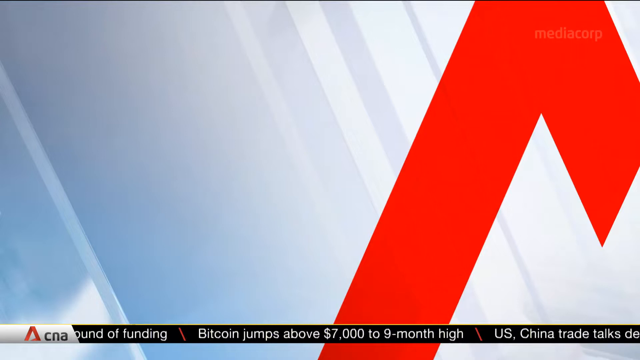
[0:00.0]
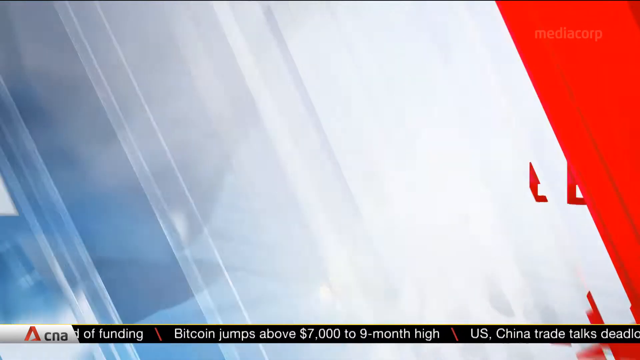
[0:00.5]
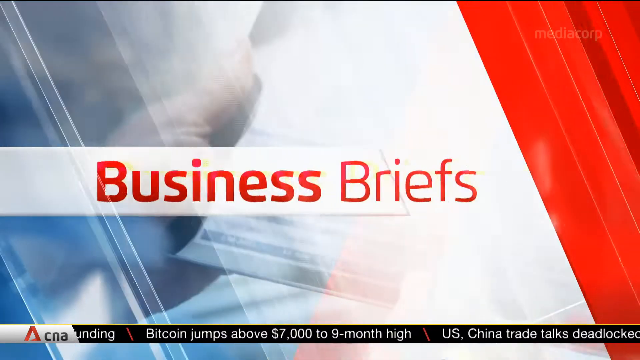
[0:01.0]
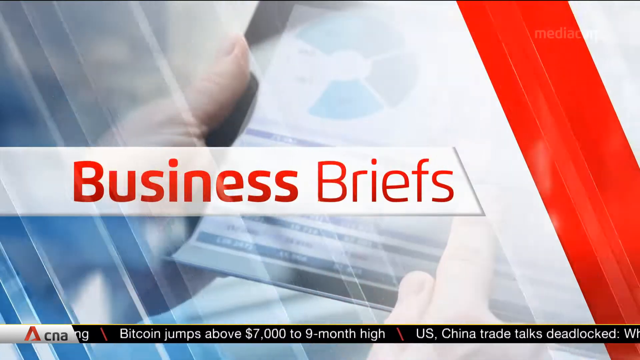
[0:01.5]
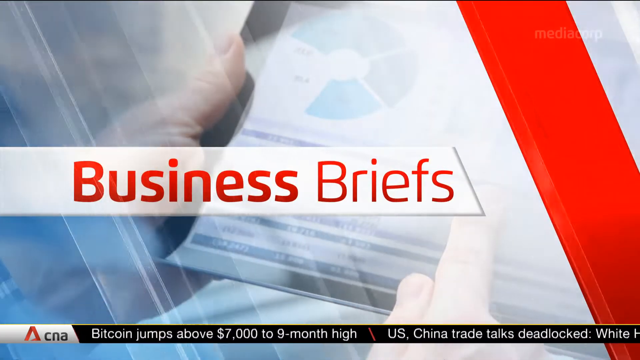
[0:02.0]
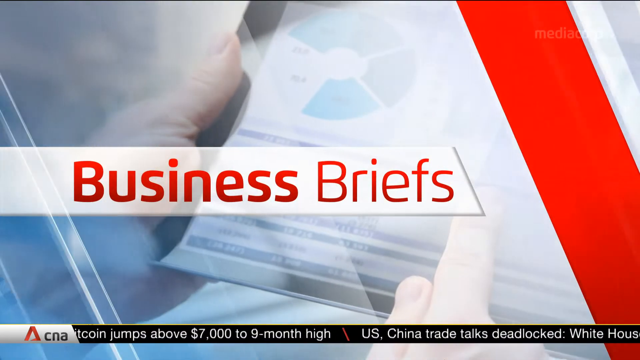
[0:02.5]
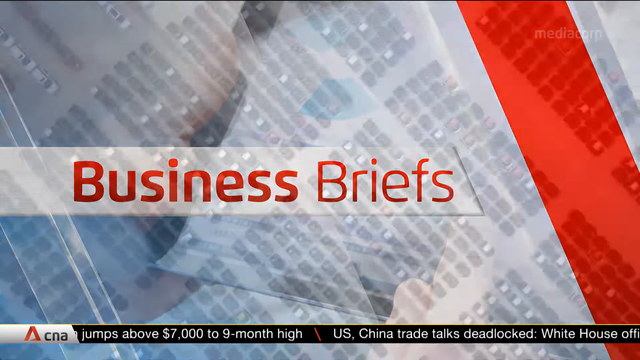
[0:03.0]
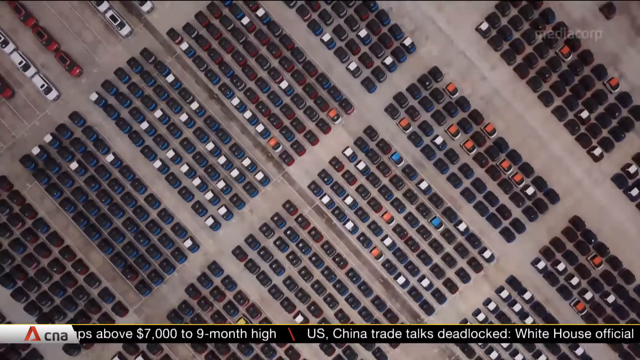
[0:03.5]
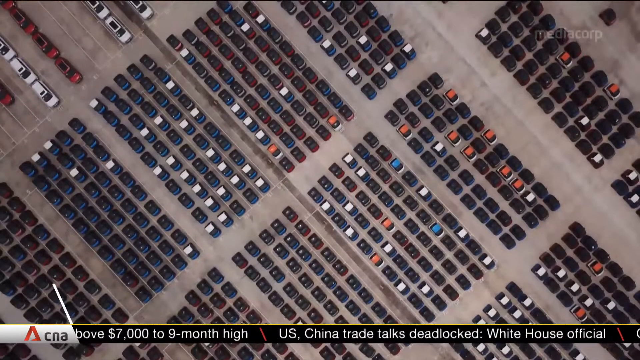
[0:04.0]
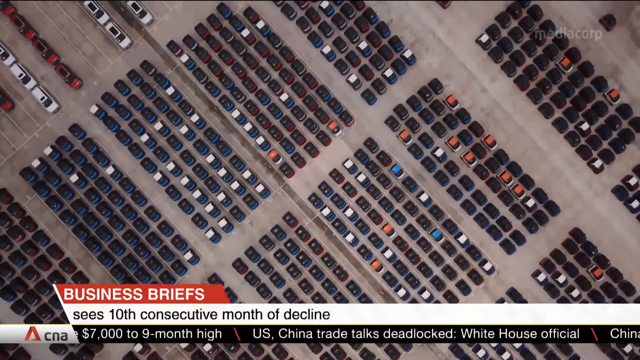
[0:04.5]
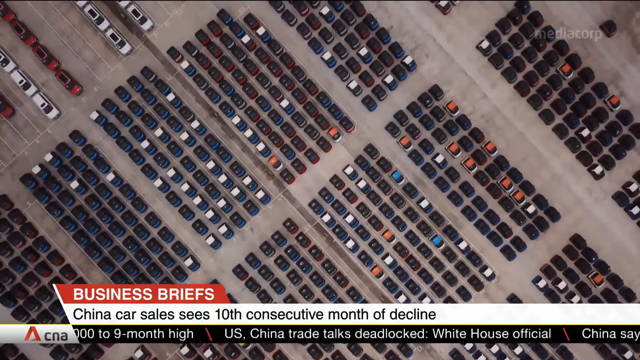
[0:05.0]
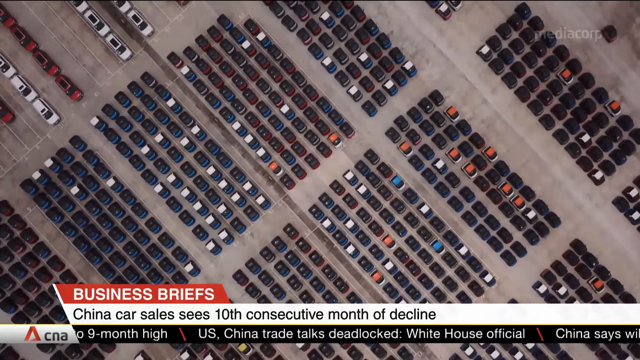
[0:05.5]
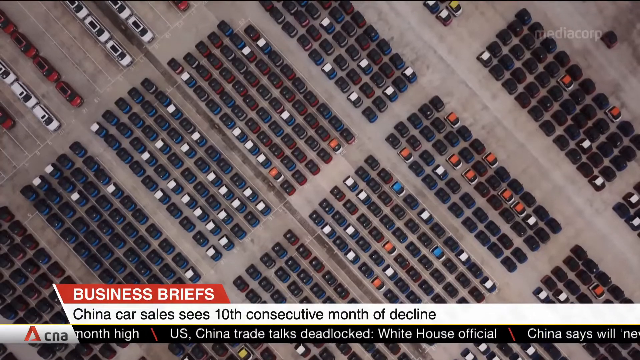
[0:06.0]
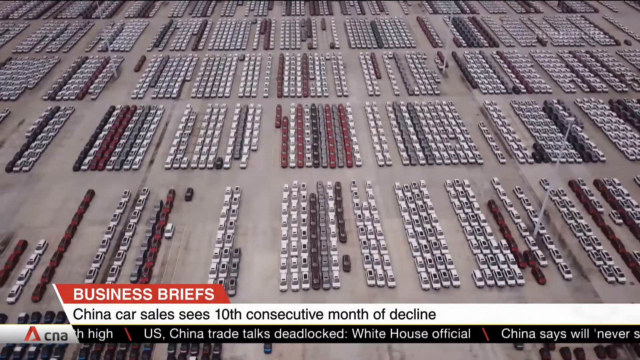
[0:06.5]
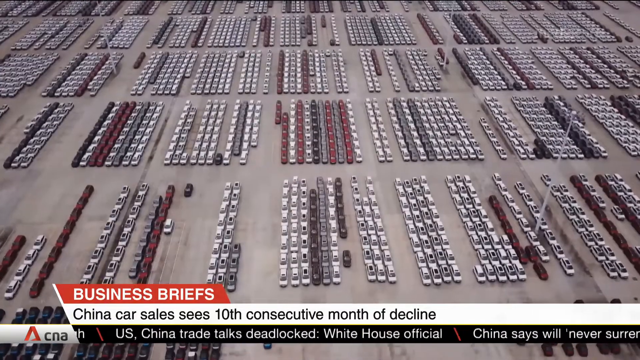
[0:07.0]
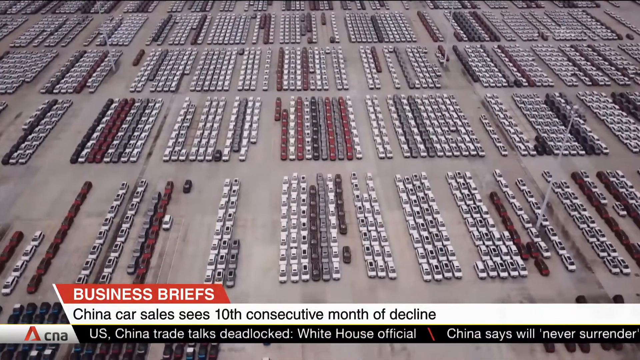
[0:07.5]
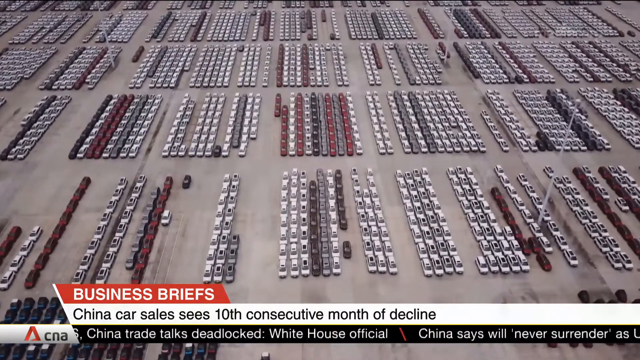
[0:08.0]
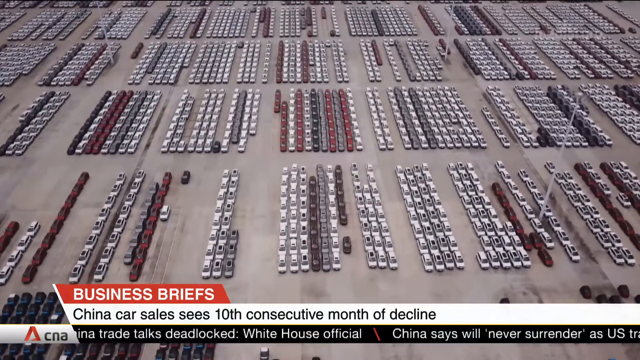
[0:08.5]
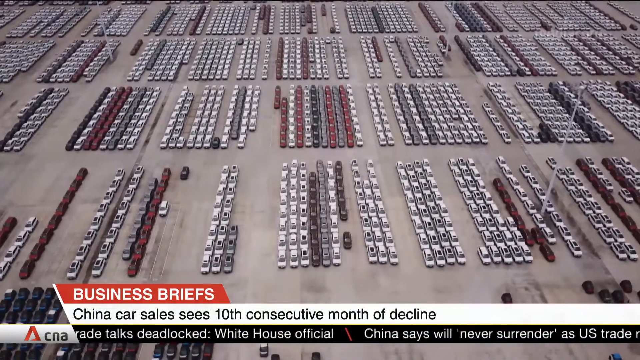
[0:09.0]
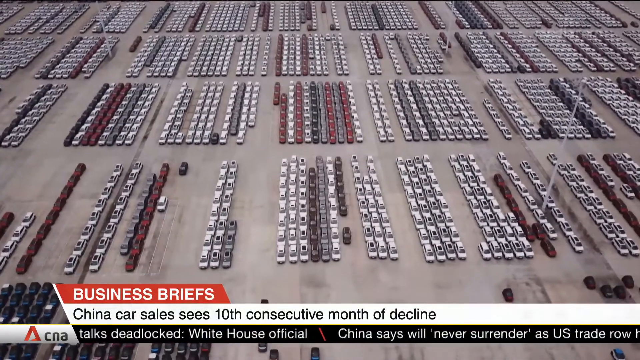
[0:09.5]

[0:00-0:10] Text reading "business briefs" appears, introducing something. An aerial view shows a parking lot or parking garage with lots of vehicles parked in very symmetric rows and columns. Another aerial shot pans down over what are presumably vehicles. In the upper left-hand corner there are clearly some vehicles, some white and some red. Most of the view is a lot of black, with some white here and there and a couple of blue and red spots, all packed together in rows. Text reads "China car sales see 10th consecutive month of decline."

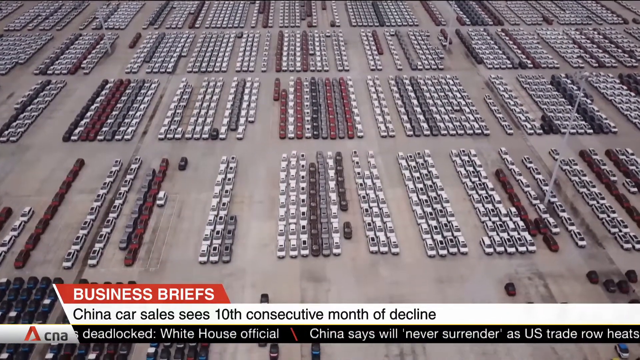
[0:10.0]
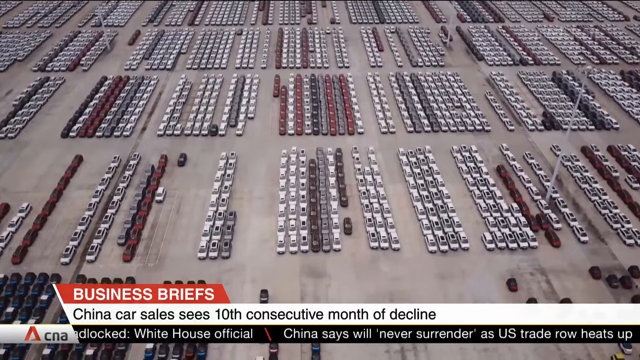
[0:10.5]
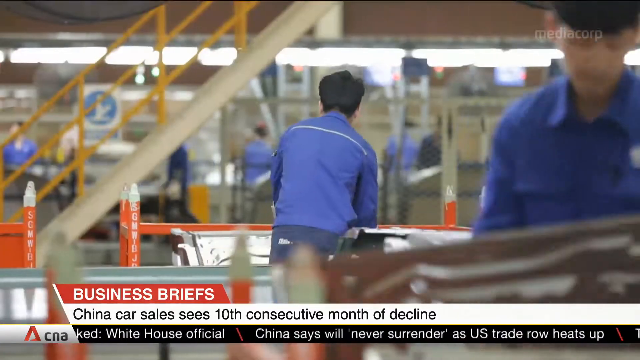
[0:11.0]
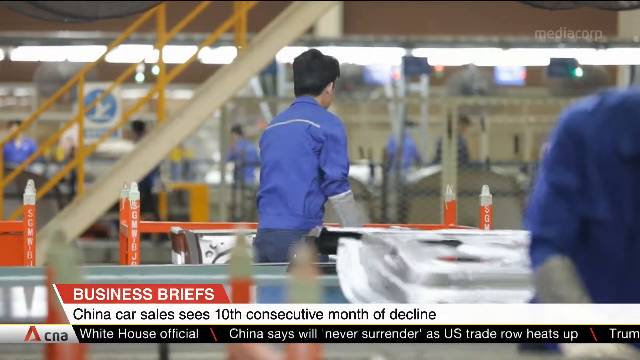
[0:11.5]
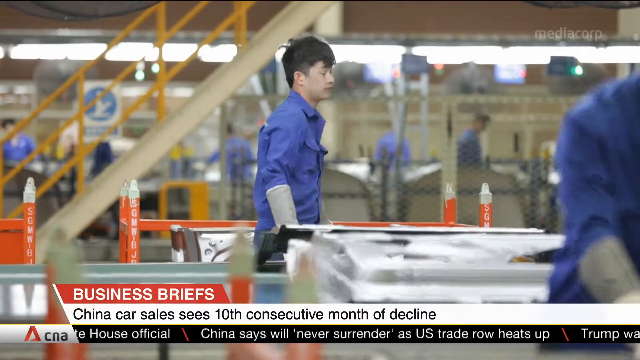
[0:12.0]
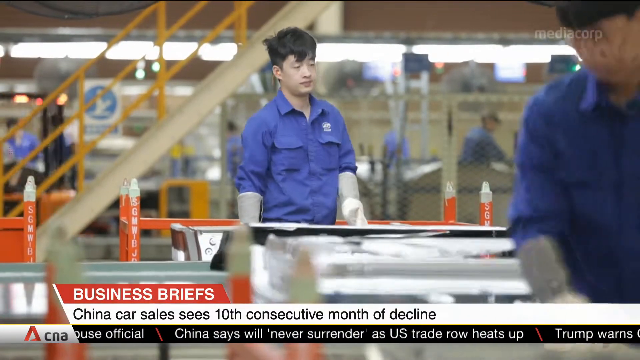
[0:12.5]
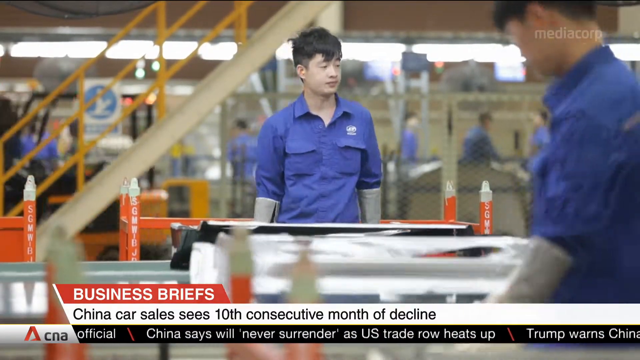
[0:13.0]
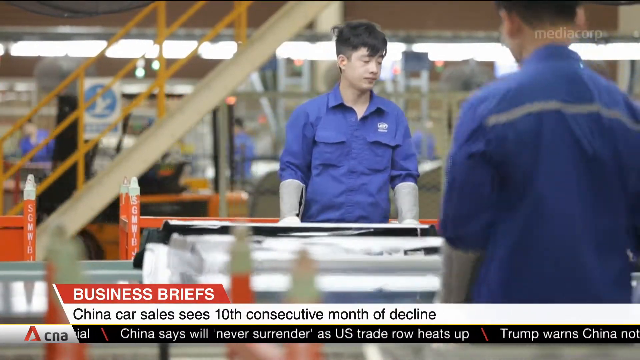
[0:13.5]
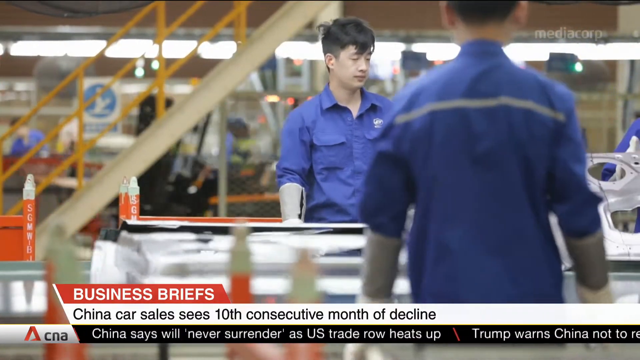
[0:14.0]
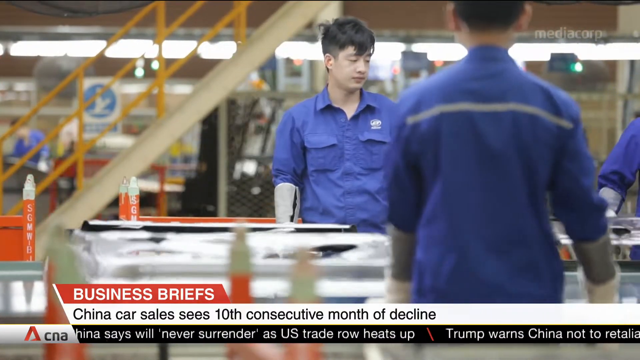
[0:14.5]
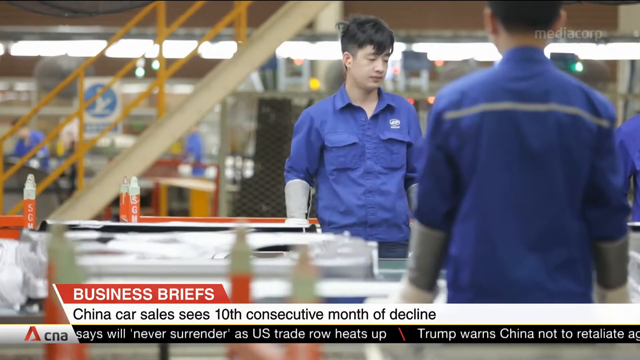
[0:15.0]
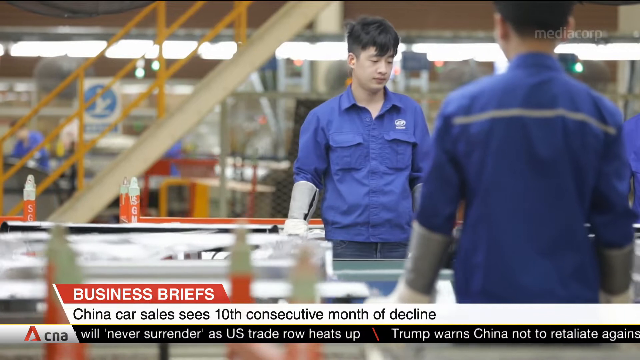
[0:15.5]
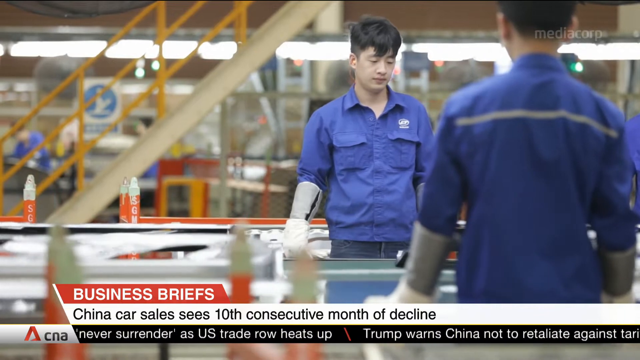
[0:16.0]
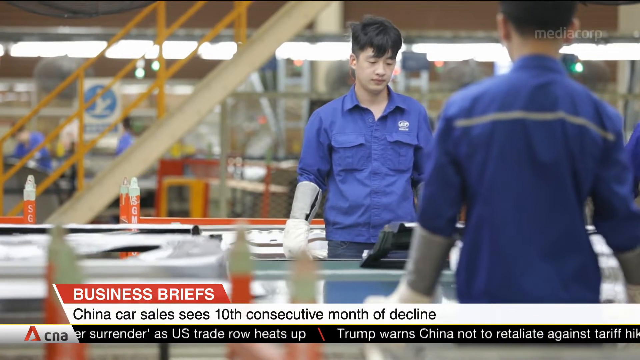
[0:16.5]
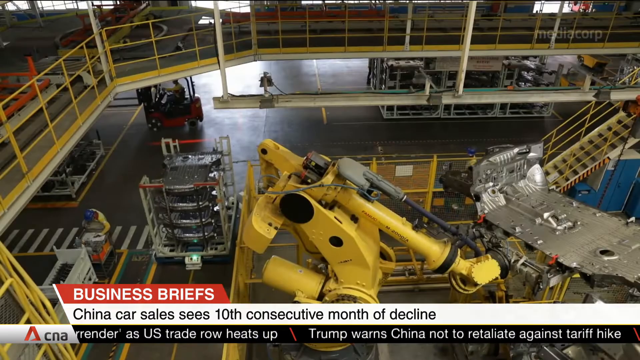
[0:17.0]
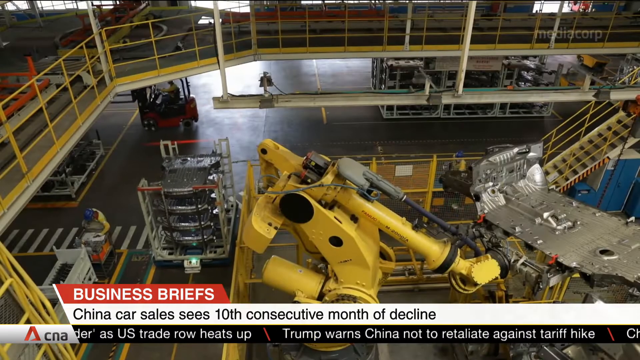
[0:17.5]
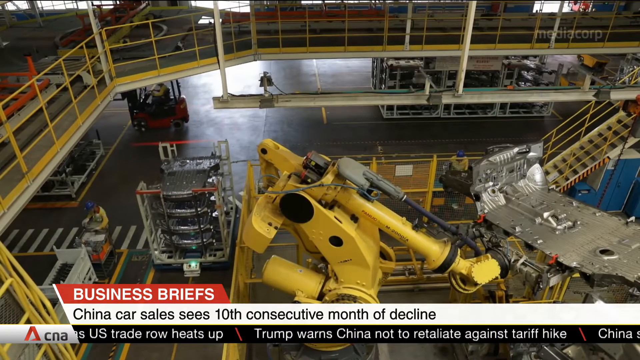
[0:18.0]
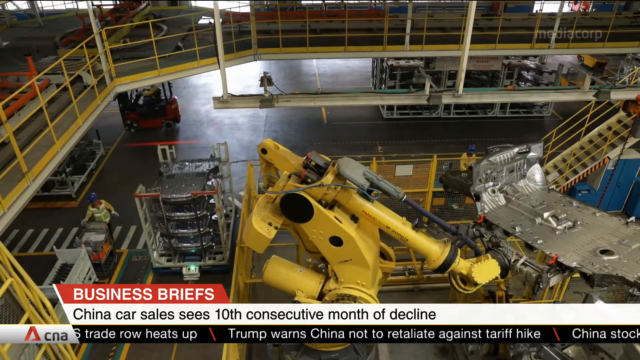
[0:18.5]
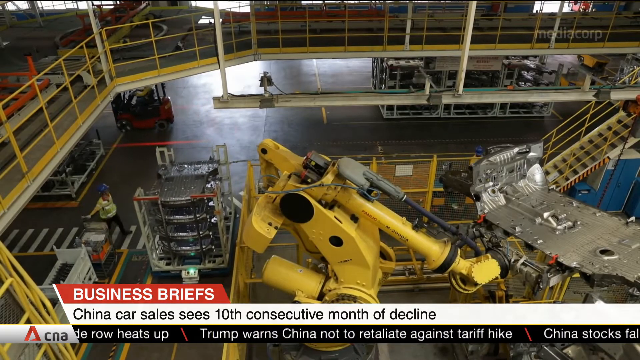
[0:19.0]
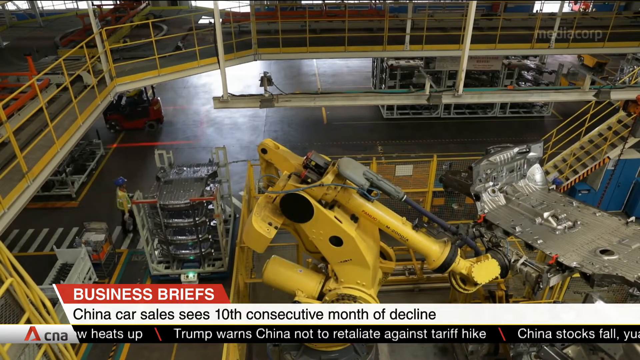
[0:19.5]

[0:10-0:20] The aerial view panning down over the vehicles is briefly shown. The video cuts to what looks like the inside of a factory where car parts, apparently door panels, are being processed. Men in blue shirts and gloves watch the panels move down conveyor belts. Another shot gives an overhead view of the factory, with a large machine, possibly hydraulic, in the foreground middle. What looks like a mezzanine is visible, possibly where the shot was taken, along with other typical factory items. A few people in blue hard hats and yellow jackets walk around.